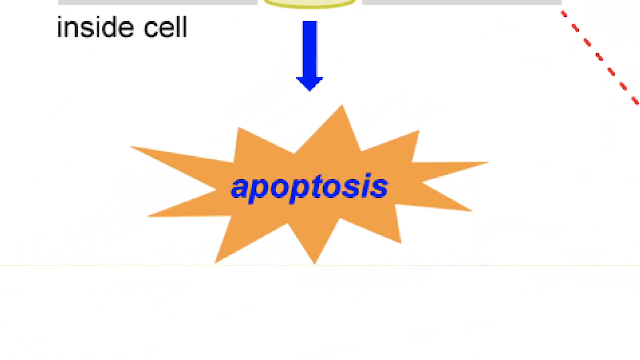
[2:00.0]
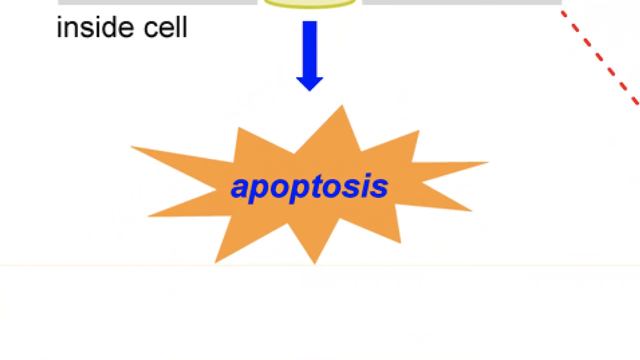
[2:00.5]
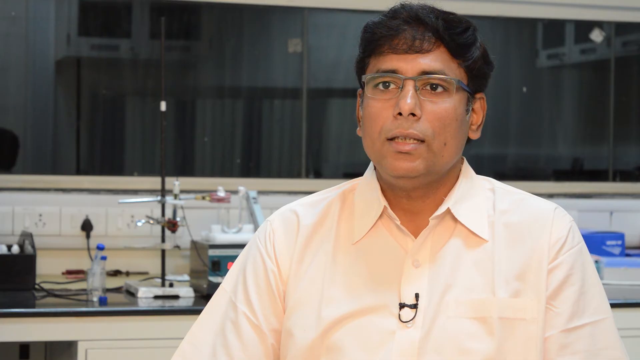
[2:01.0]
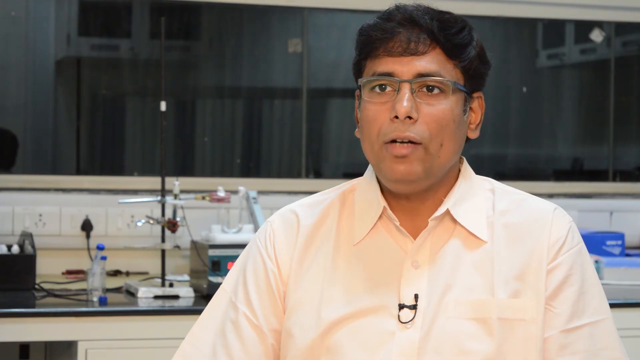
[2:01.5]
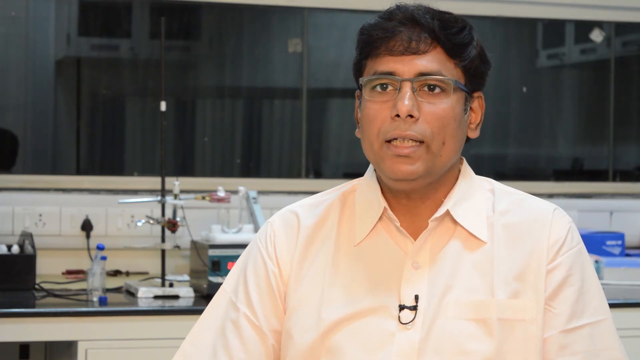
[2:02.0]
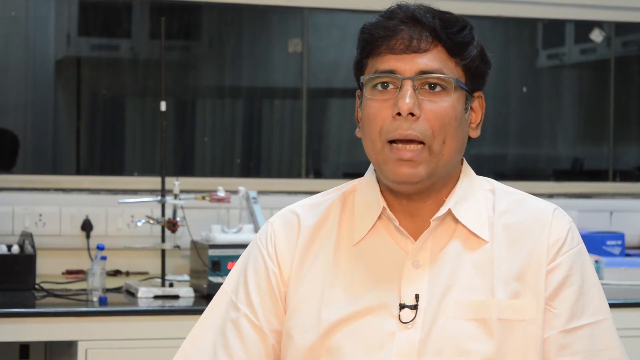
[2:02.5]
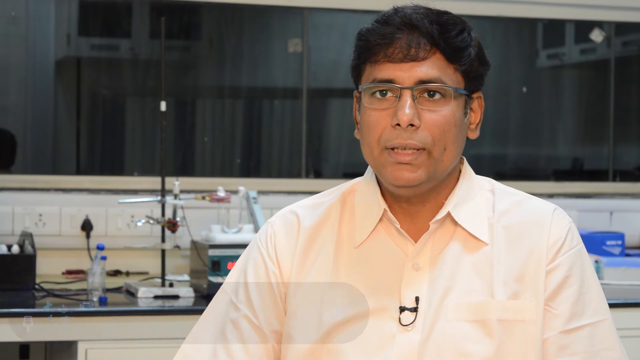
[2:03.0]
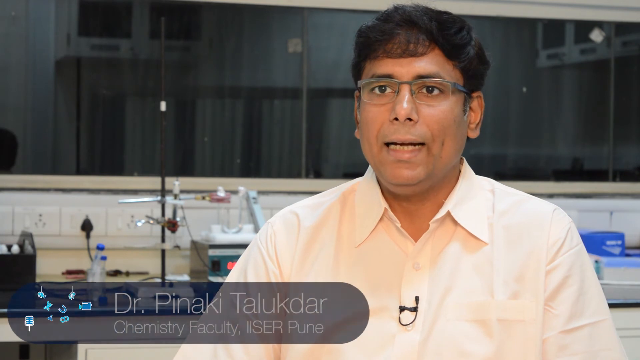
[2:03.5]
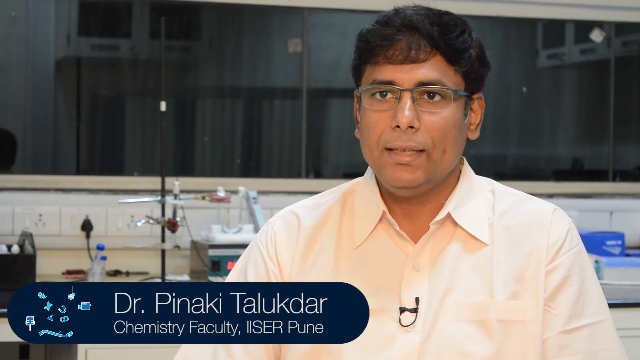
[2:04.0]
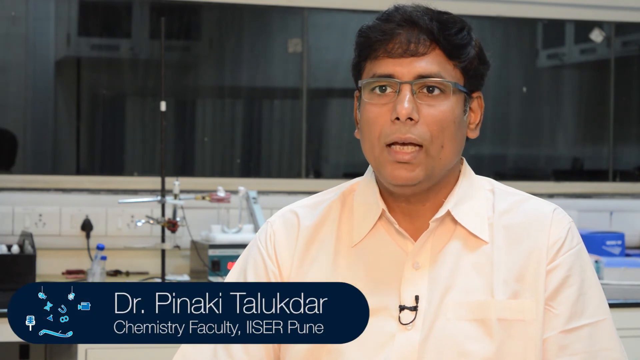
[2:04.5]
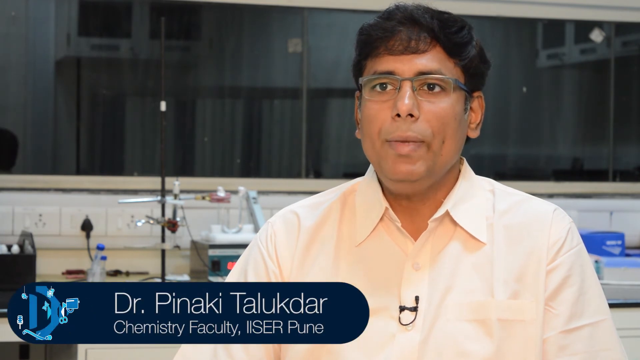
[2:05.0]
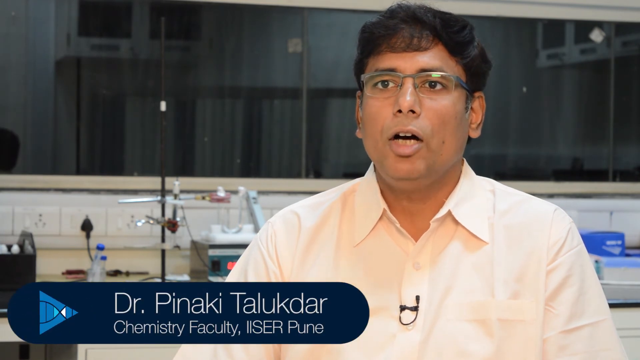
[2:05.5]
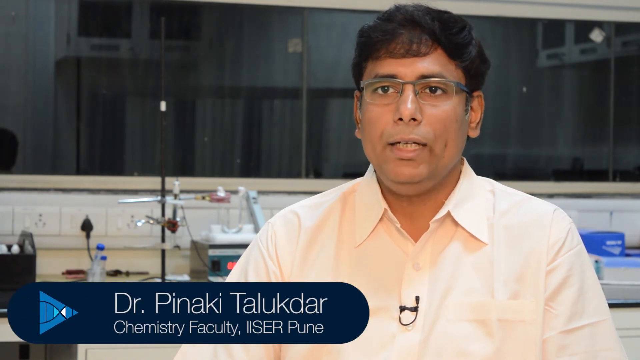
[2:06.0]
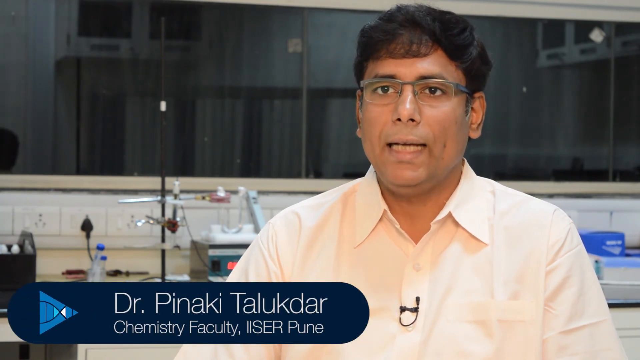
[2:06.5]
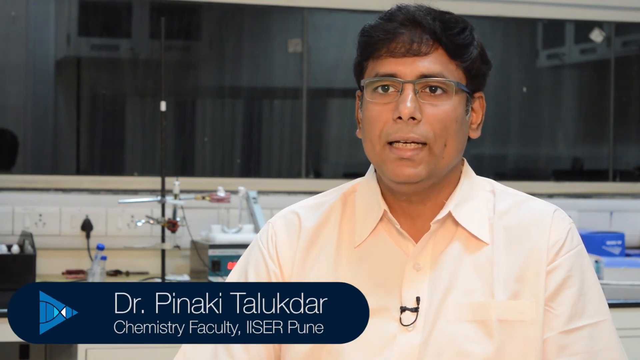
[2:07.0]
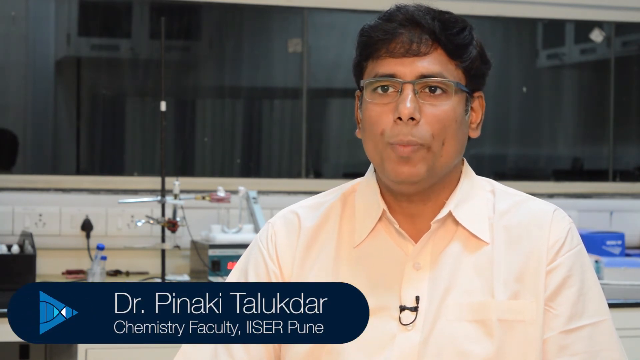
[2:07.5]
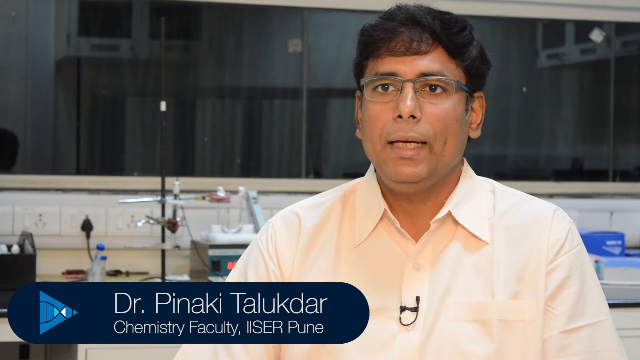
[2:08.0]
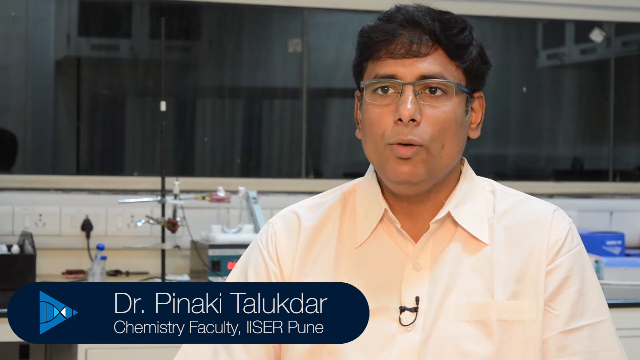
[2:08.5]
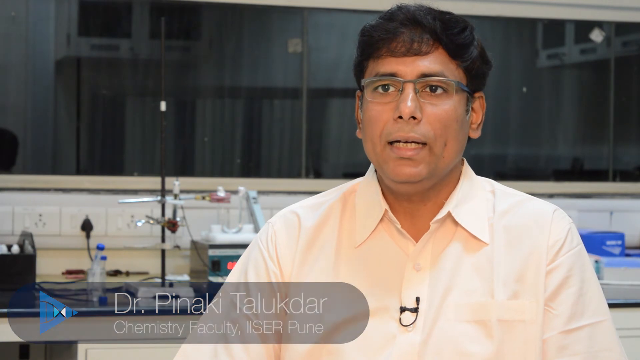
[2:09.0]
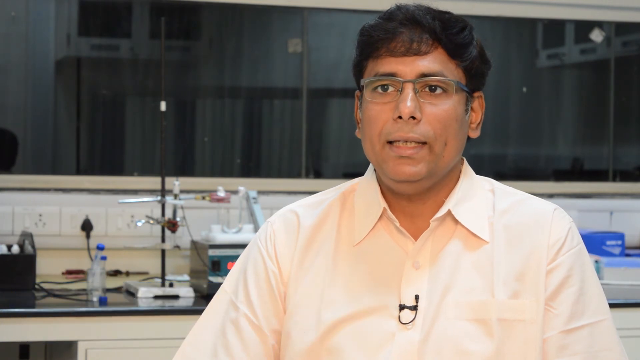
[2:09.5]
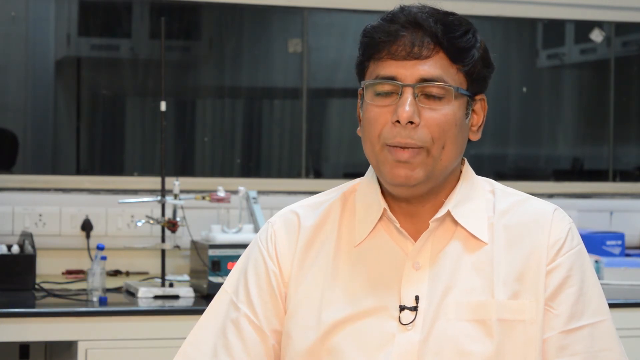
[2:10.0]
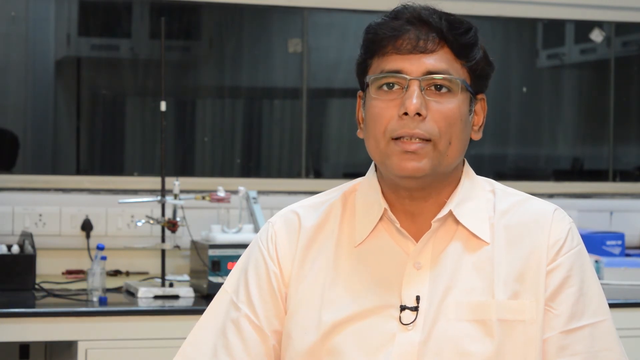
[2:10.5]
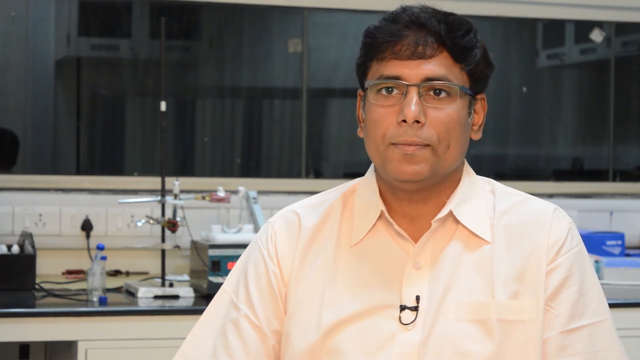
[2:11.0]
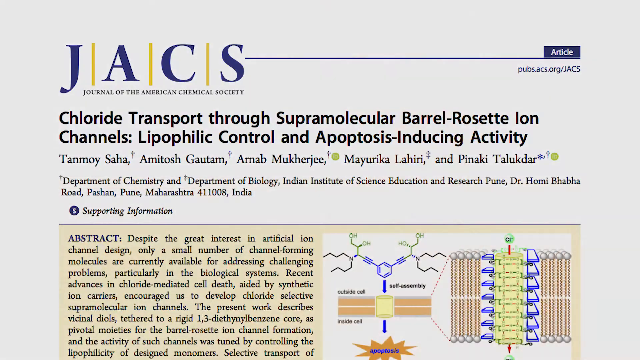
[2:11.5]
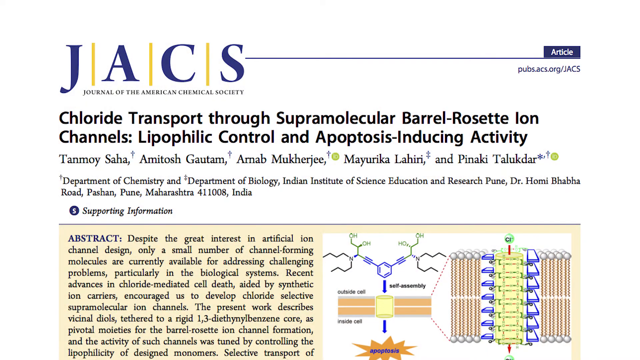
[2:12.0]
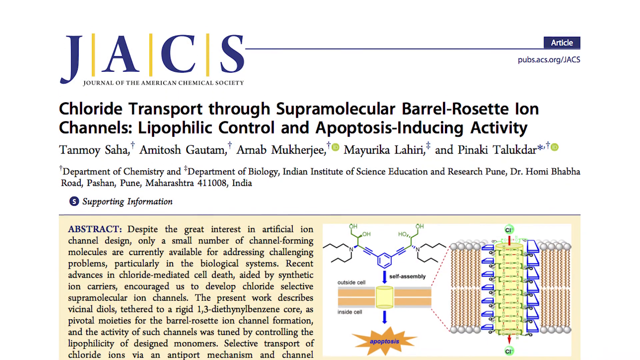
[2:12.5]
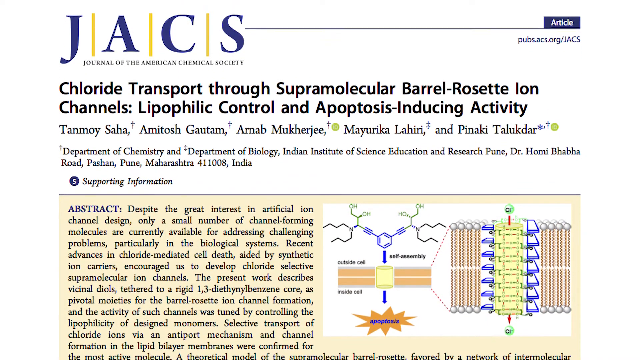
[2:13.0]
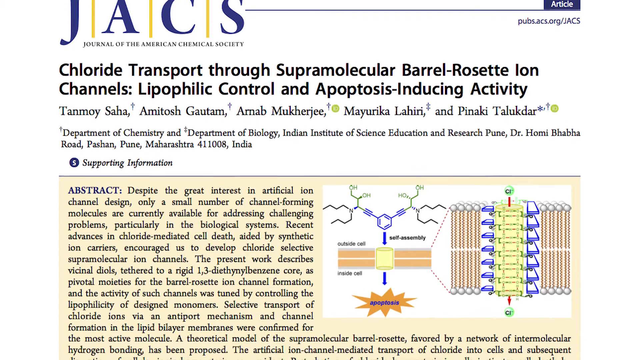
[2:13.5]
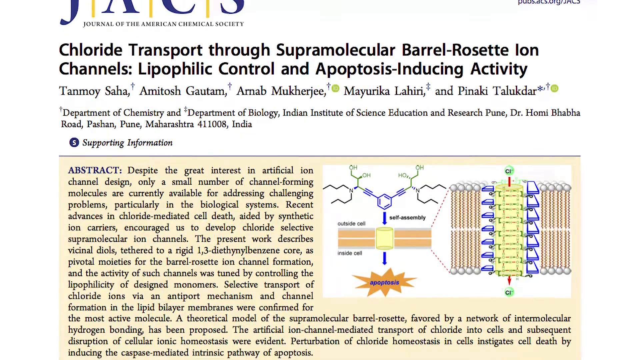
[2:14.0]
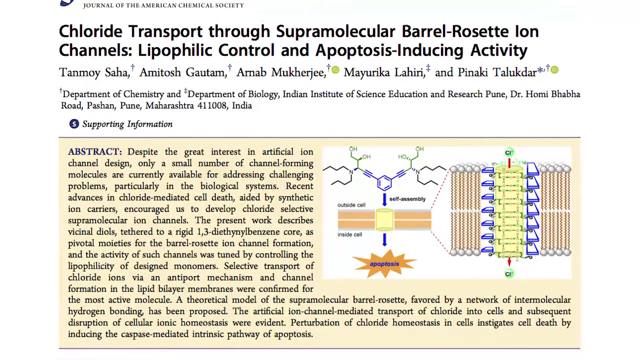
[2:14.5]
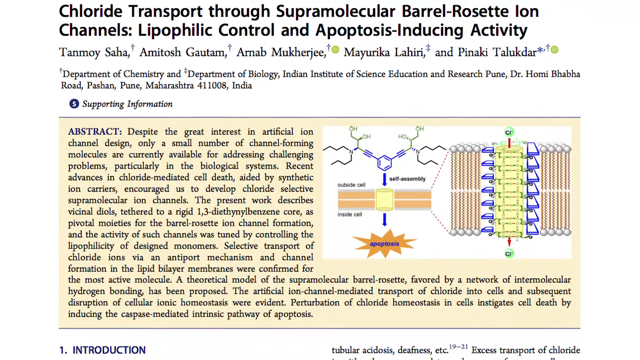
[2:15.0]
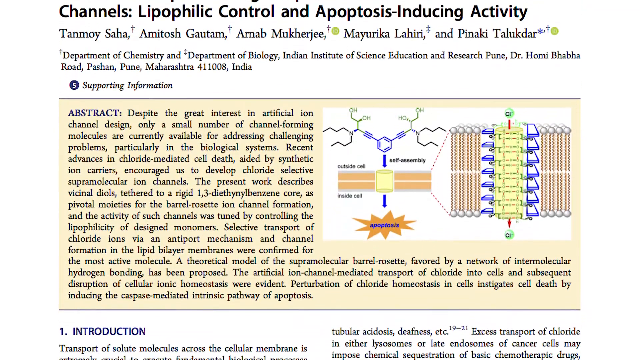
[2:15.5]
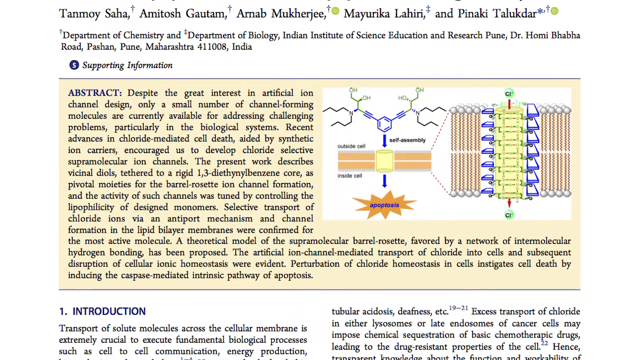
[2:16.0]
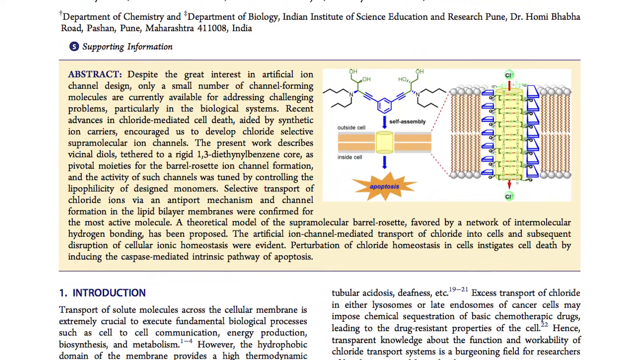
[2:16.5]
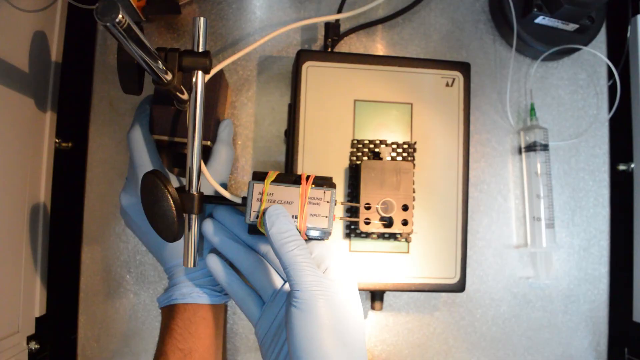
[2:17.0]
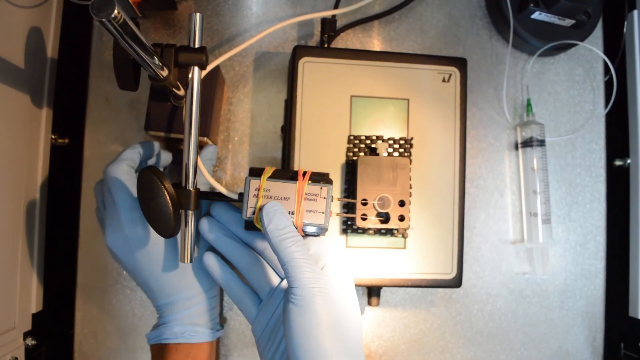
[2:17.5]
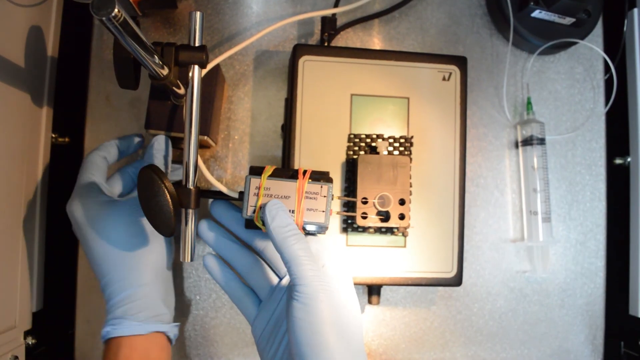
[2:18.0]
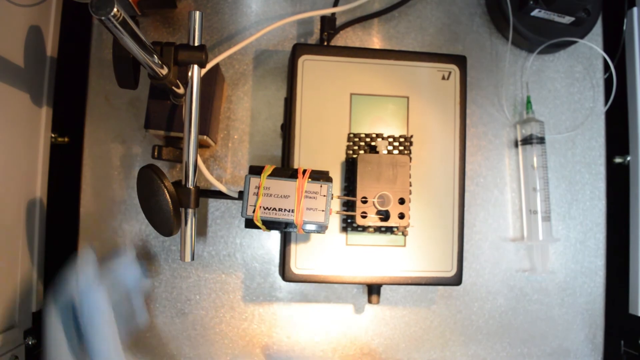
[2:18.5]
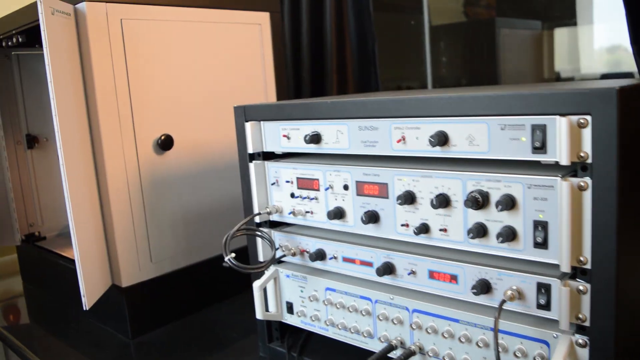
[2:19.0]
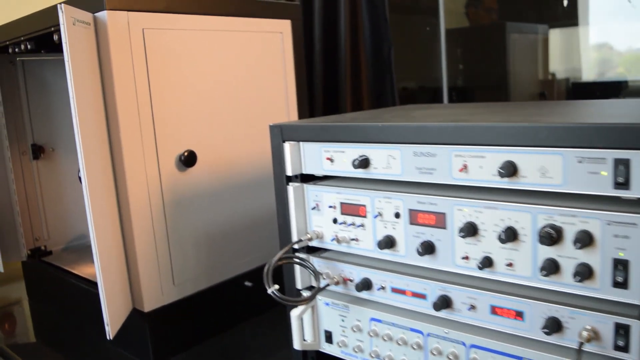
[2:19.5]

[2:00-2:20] A colorful diagram in blue and orange appears with the text "inside cell", along with a shape that looks like a star made of more triangles, with "apoptosis" written inside it. Next, a scientist is shown speaking, identified as Dr. Tanaki Talukdar, chemistry faculty at Eiser-Puhn. Then a Journal of the American Chemical Society item appears, with a title beginning "chloride transport through supramolecular" and ending "apoptosis inducing activity". Its text reads: "despite great interest in artificial ion channel design, only a small number of channel forming molecules are currently available for addressing challenging problems, particularly in the biological systems."